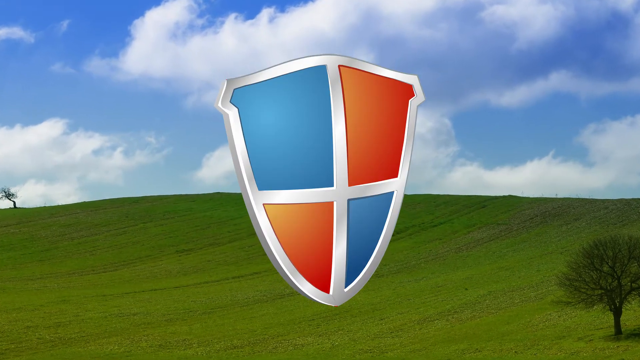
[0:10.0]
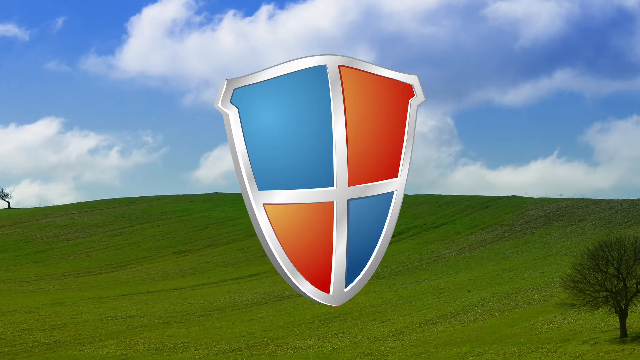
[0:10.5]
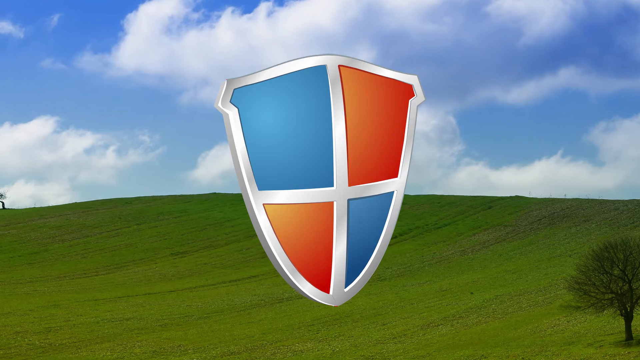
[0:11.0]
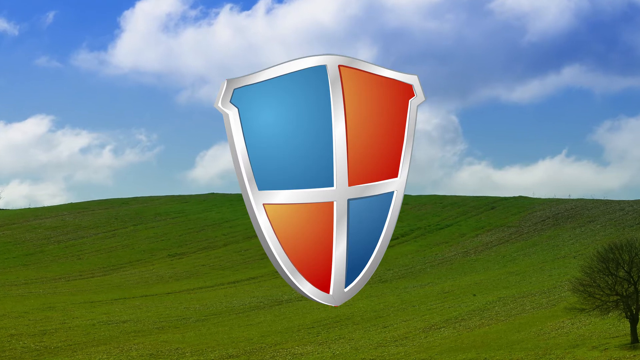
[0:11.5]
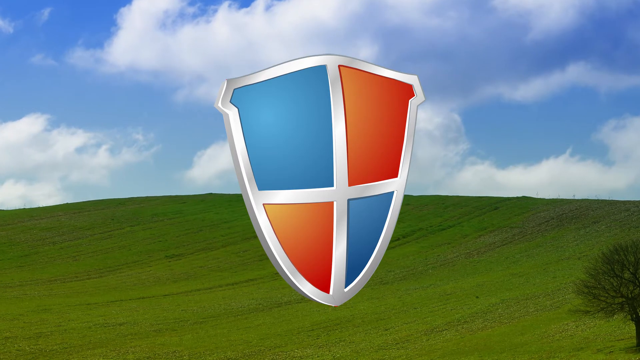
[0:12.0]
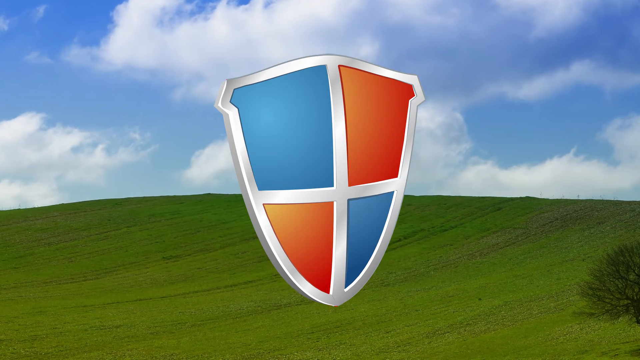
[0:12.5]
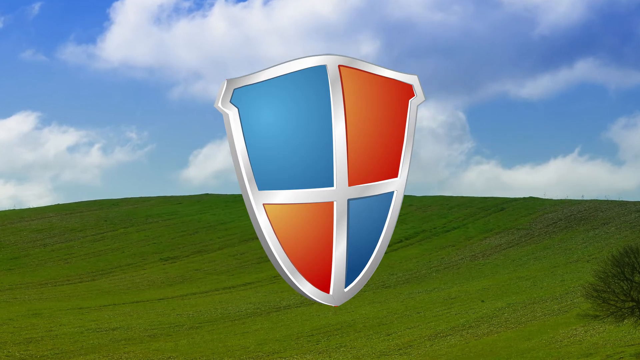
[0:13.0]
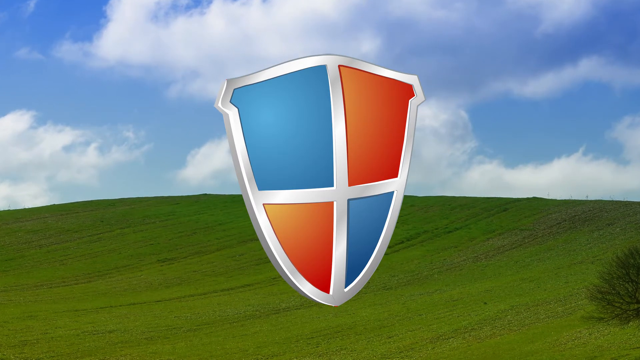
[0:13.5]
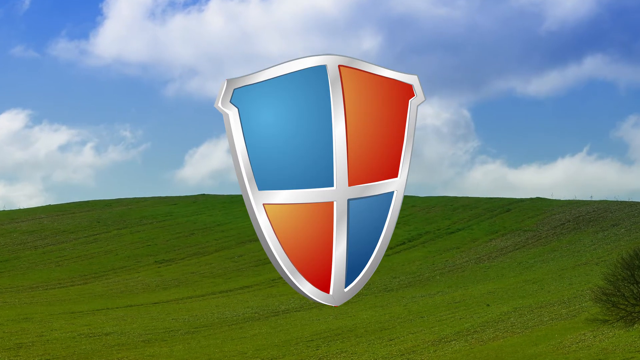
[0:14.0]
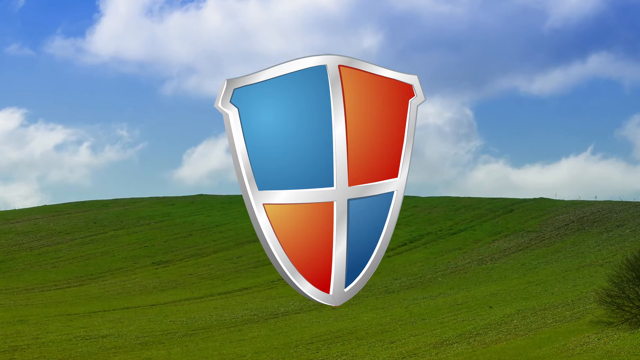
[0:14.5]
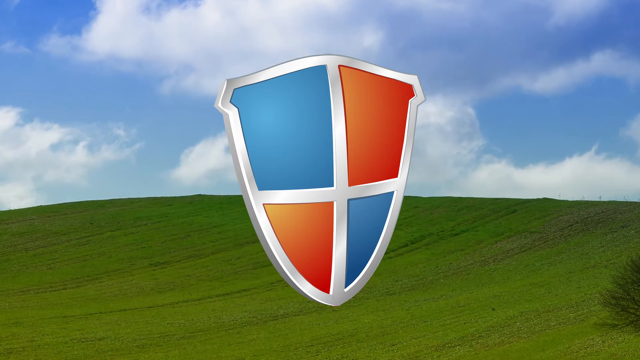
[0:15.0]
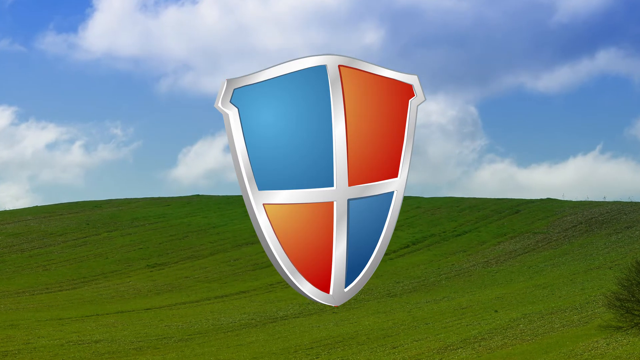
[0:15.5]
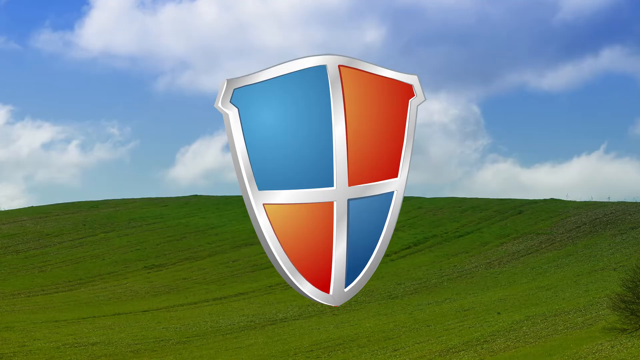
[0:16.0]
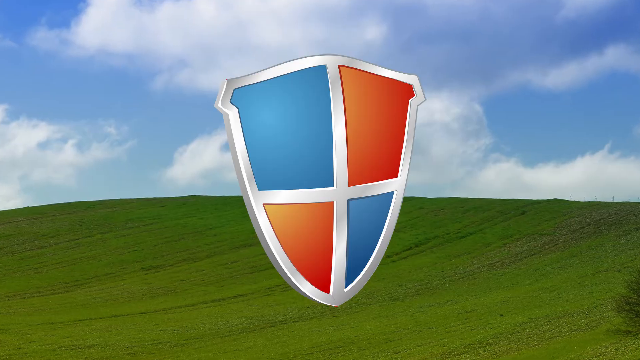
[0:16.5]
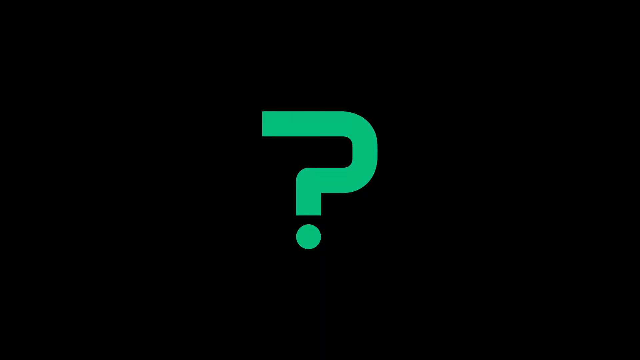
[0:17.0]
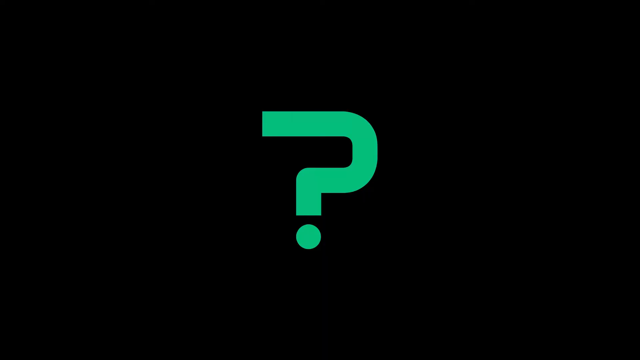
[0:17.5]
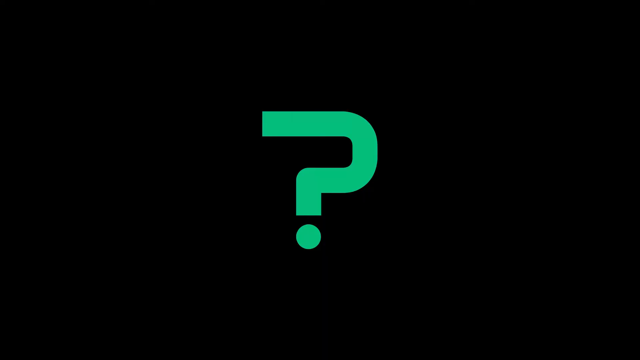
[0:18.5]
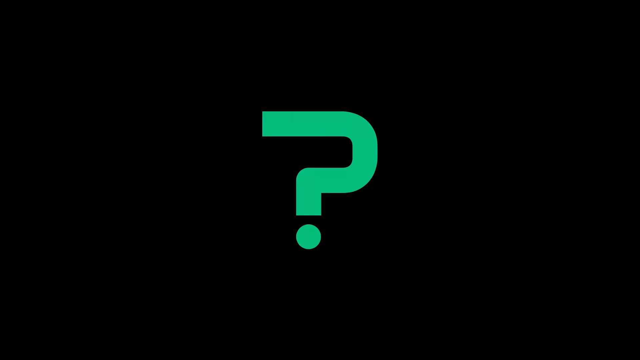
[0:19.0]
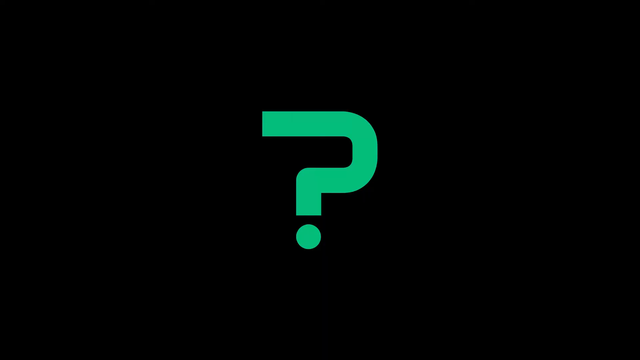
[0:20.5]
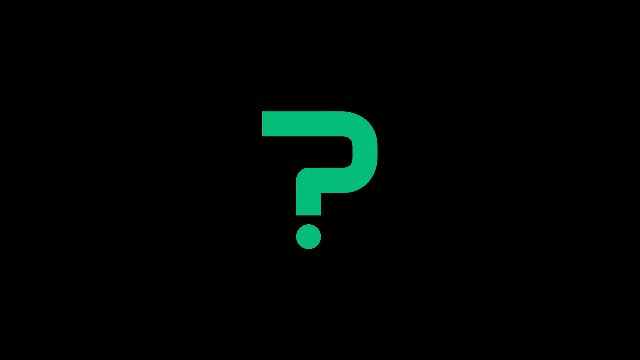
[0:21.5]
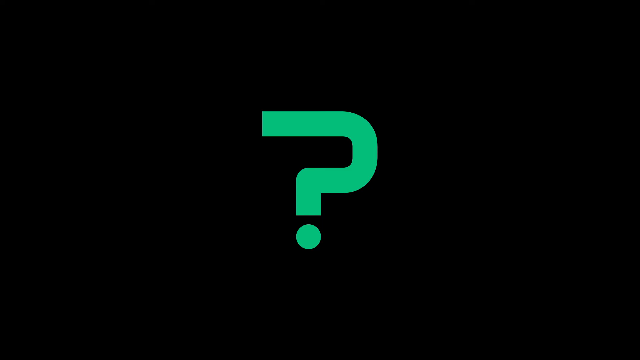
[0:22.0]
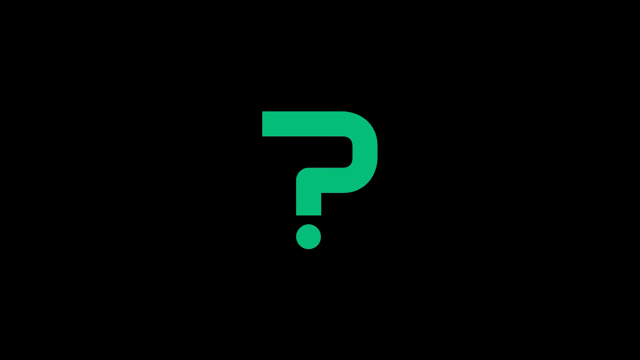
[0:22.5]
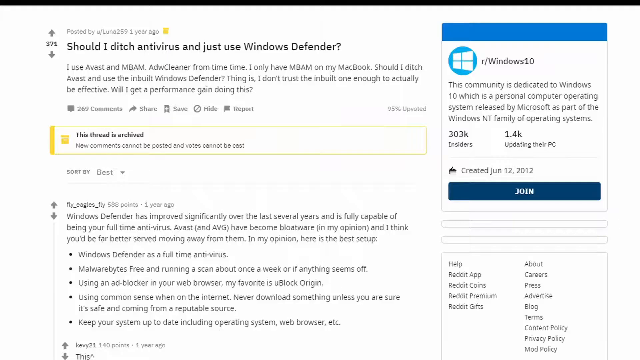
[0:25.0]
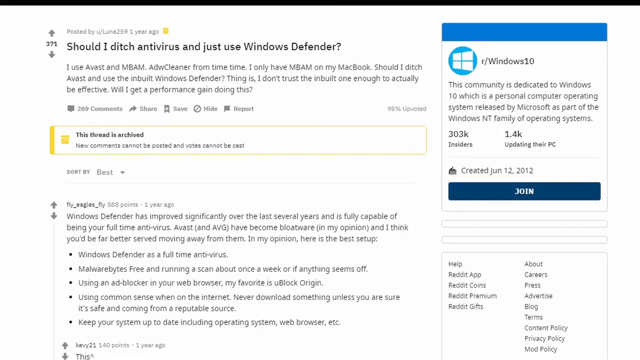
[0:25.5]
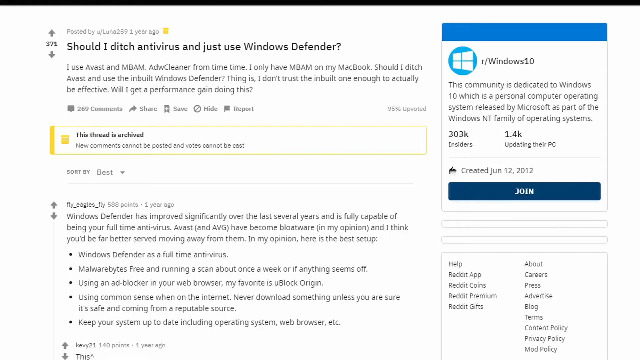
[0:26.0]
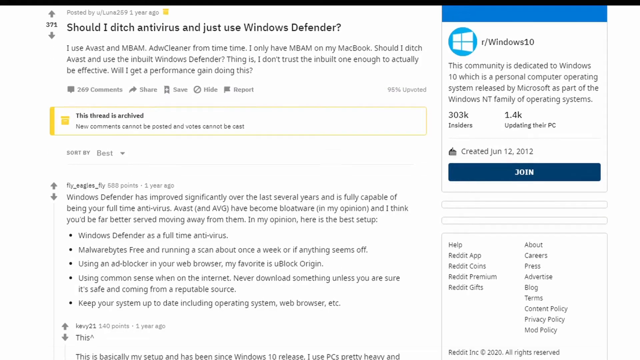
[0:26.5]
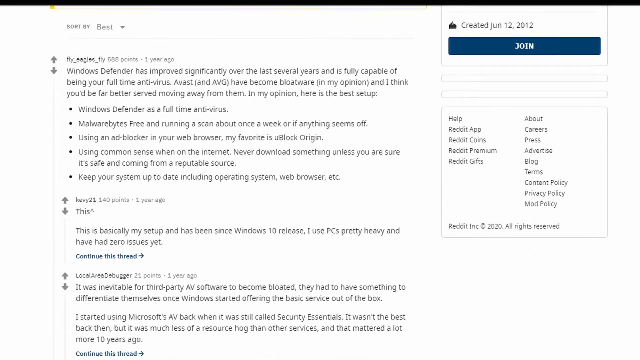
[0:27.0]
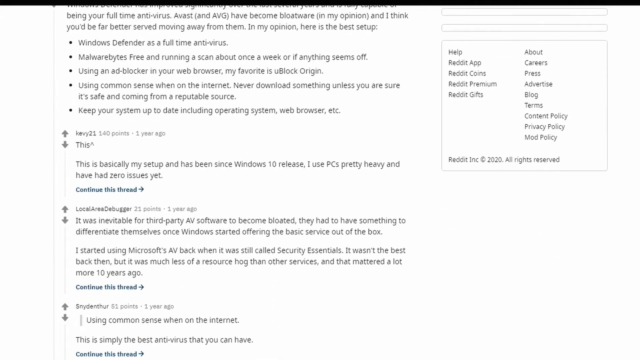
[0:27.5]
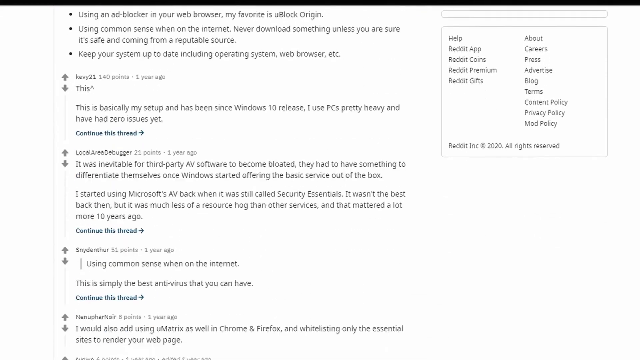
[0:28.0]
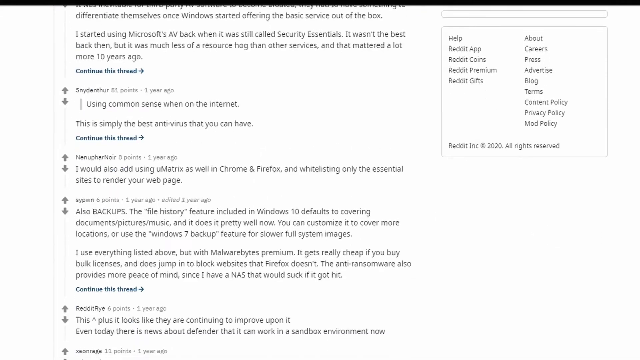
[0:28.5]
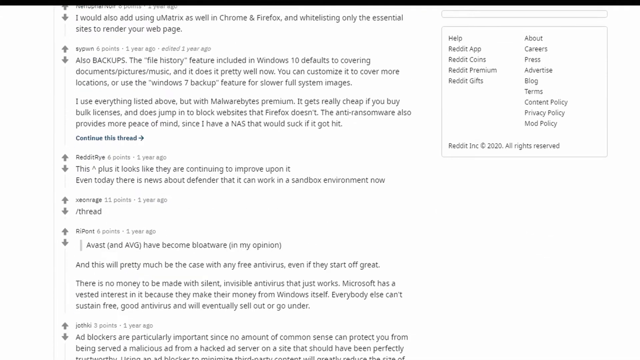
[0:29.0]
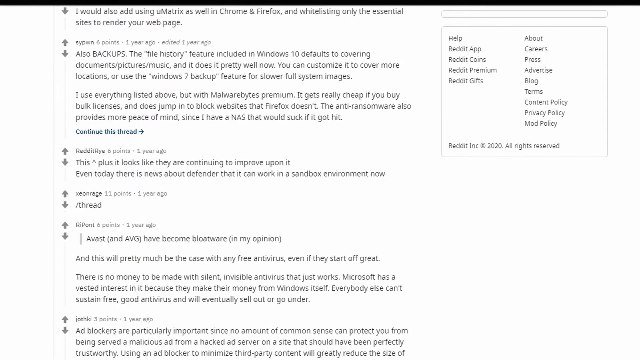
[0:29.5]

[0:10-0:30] The shield remains on screen. The background appears to zoom in while the shield stays in place at the same size. As the view draws closer and closer, a black screen with a green question mark pops up. What follows appears to be about Windows Defender: a page that looks like Reddit, on r/Windows 10, reads "should I ditch antivirus and just use Windows Defender?" The post mentions Avast and other antivirus and cleaner programs the poster ditched, and asks whether to just use Windows Defender instead of these other antivirus programs.